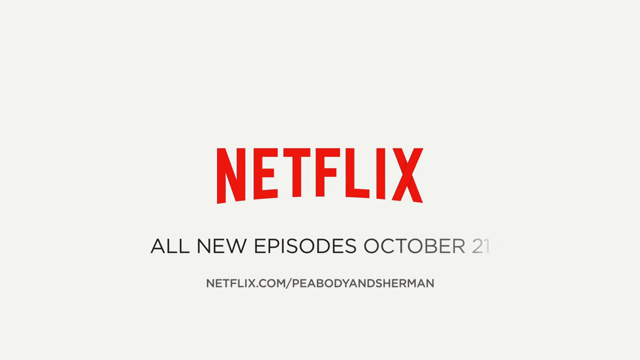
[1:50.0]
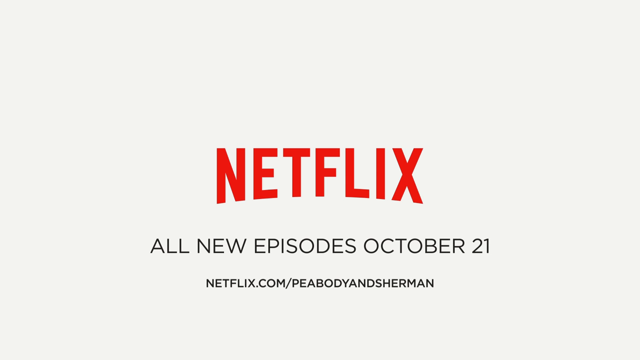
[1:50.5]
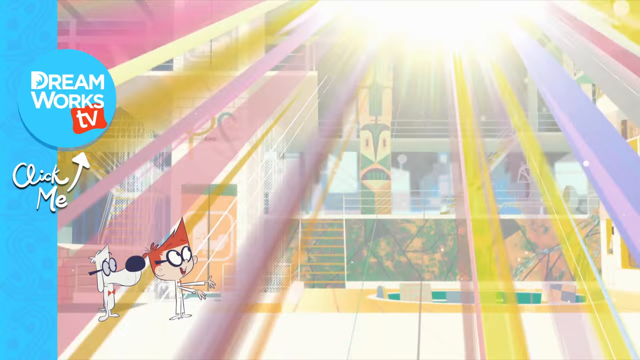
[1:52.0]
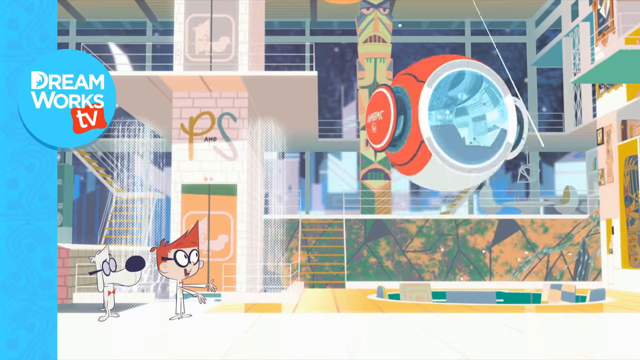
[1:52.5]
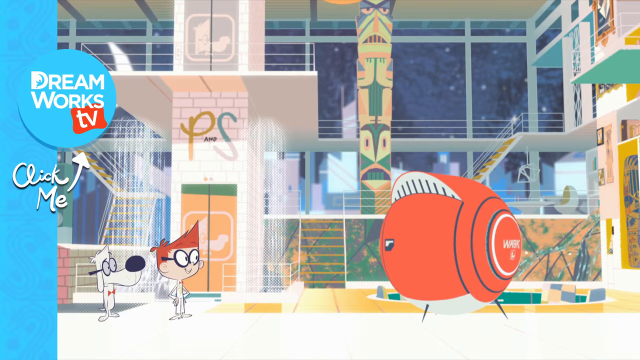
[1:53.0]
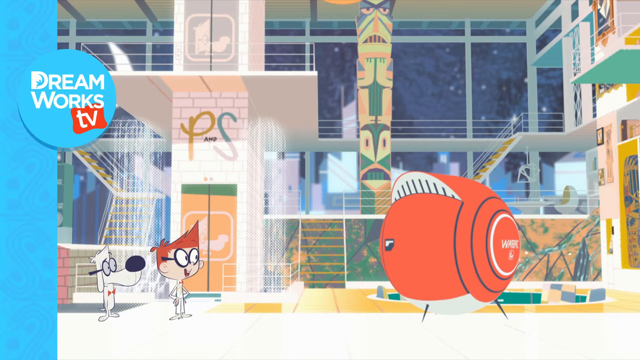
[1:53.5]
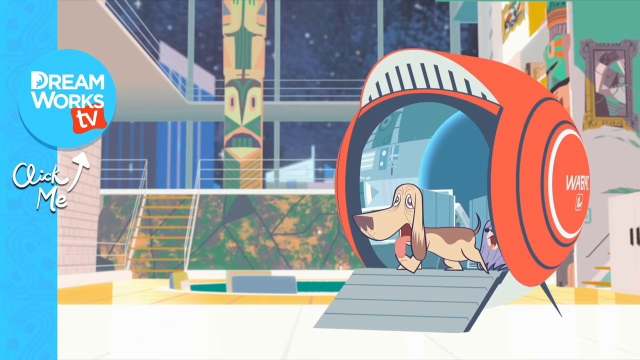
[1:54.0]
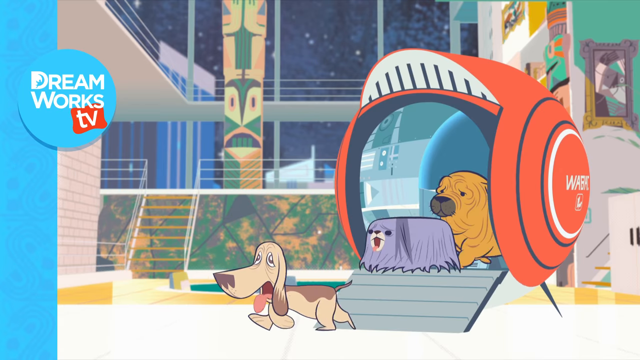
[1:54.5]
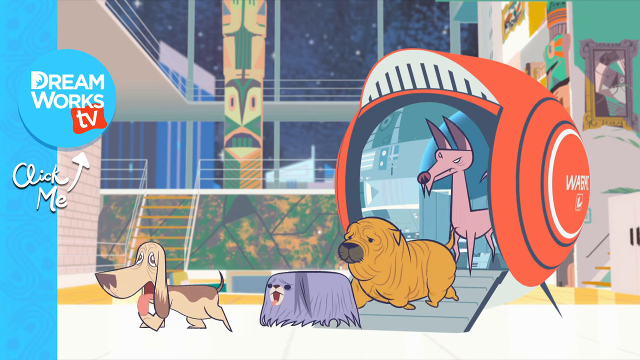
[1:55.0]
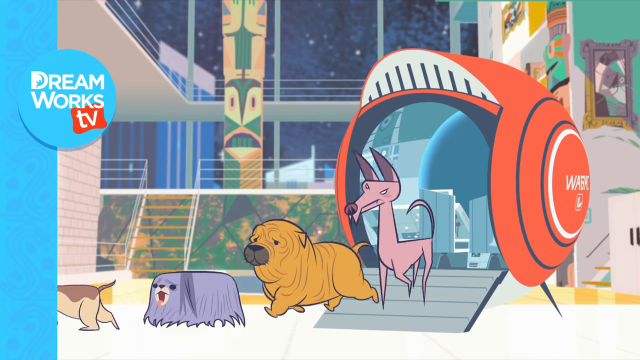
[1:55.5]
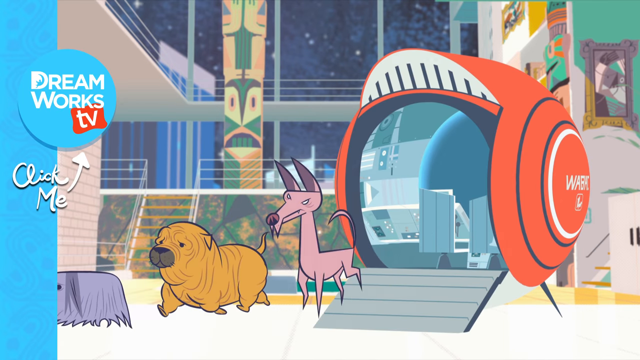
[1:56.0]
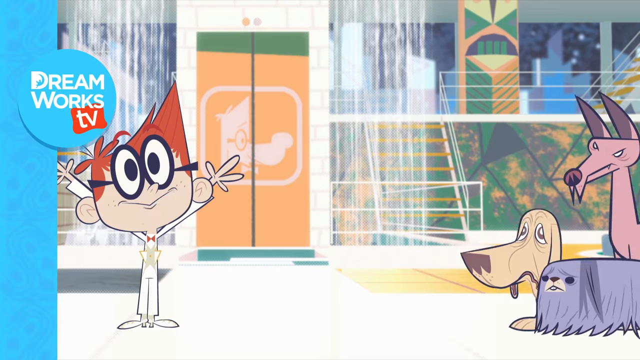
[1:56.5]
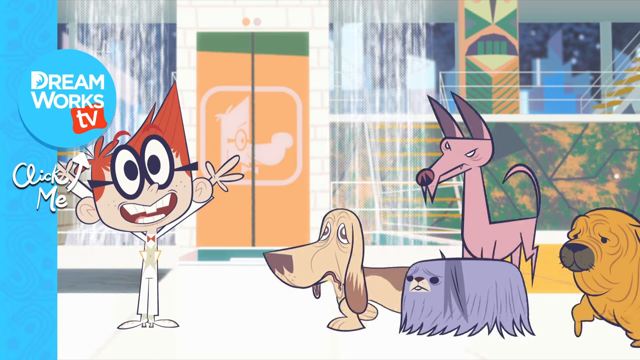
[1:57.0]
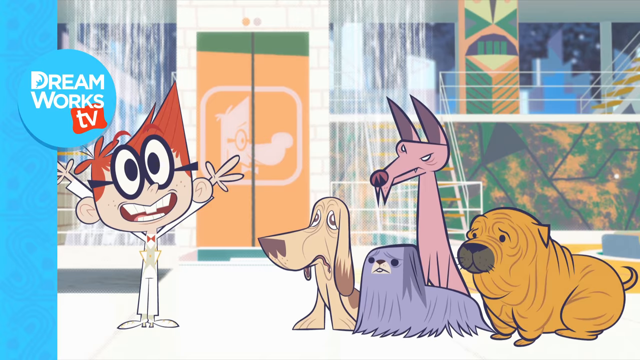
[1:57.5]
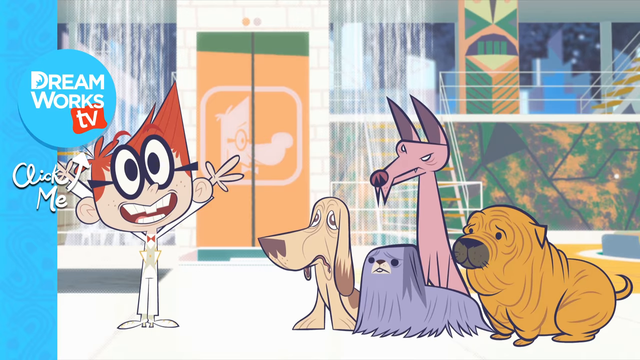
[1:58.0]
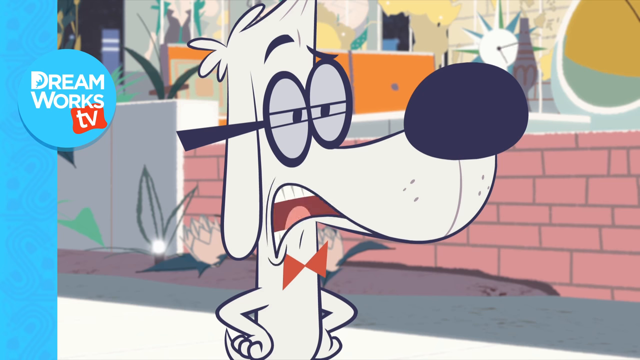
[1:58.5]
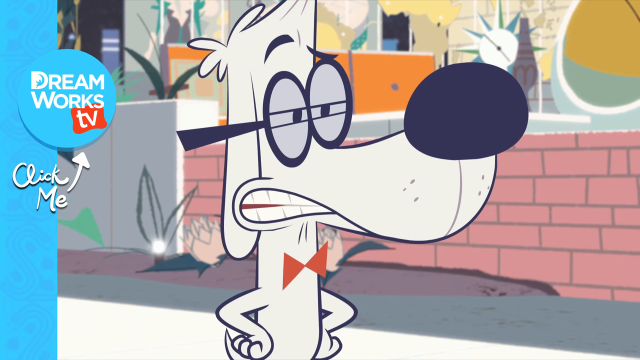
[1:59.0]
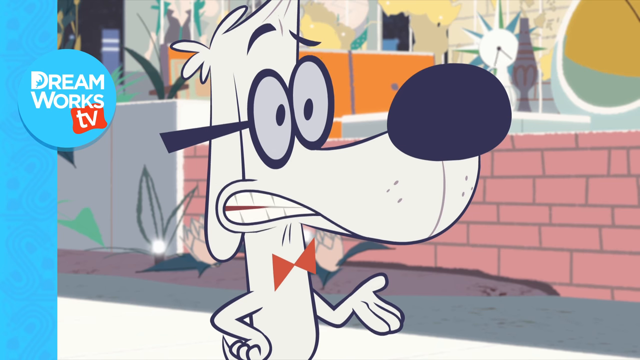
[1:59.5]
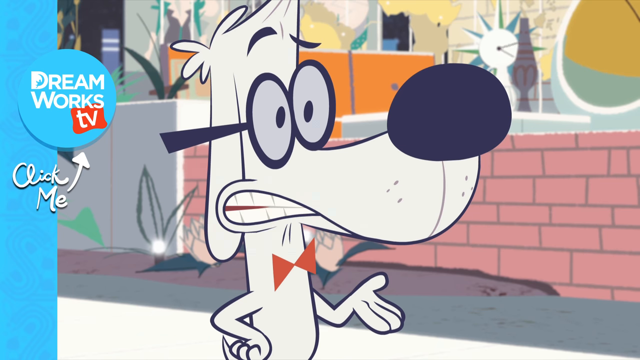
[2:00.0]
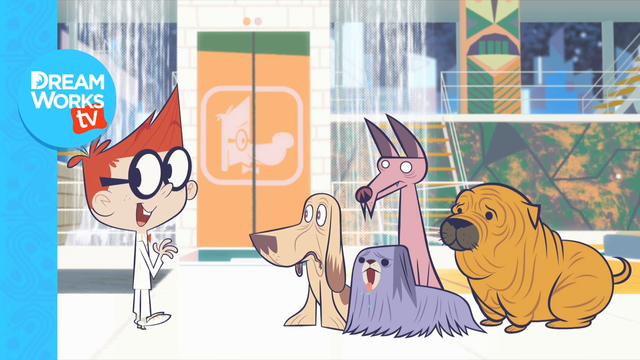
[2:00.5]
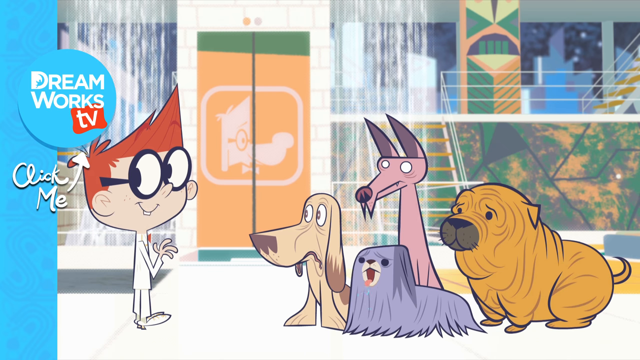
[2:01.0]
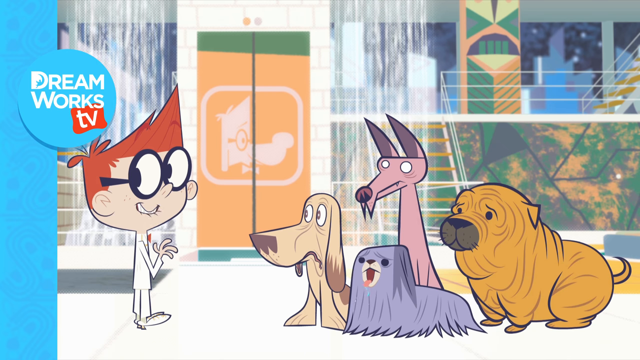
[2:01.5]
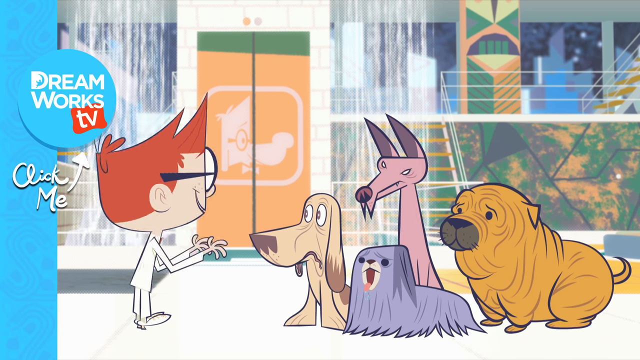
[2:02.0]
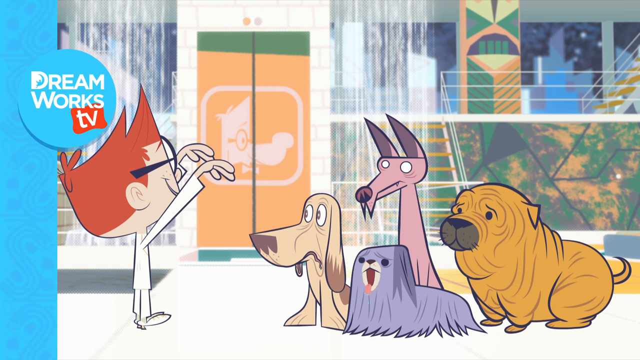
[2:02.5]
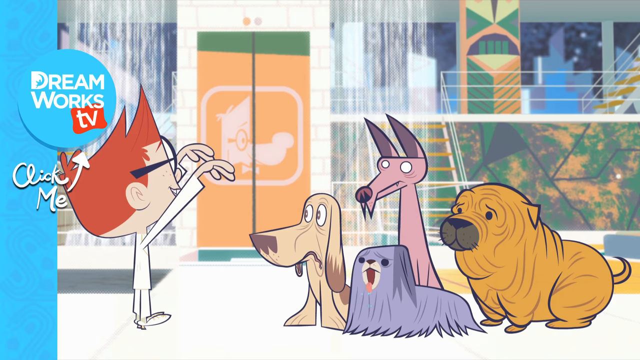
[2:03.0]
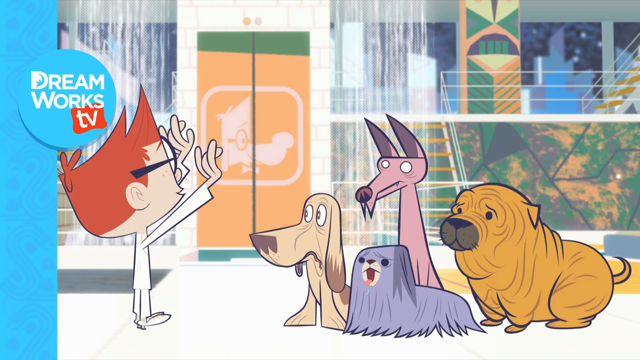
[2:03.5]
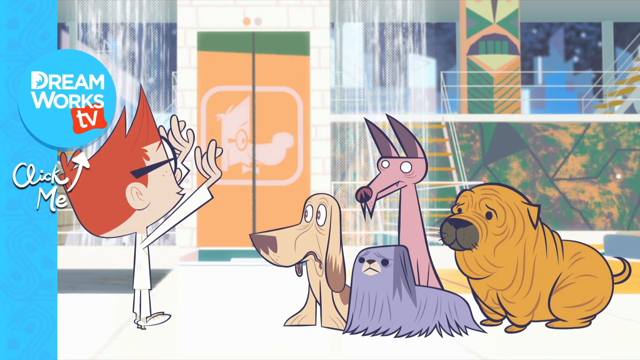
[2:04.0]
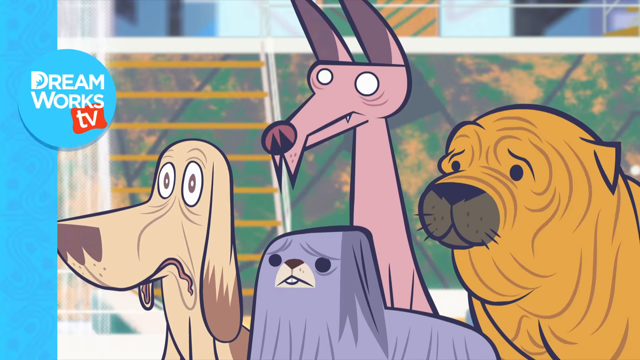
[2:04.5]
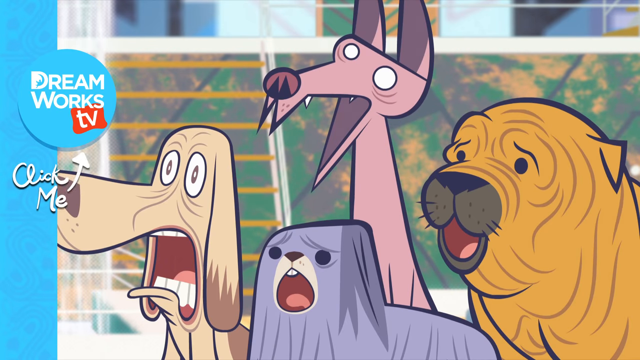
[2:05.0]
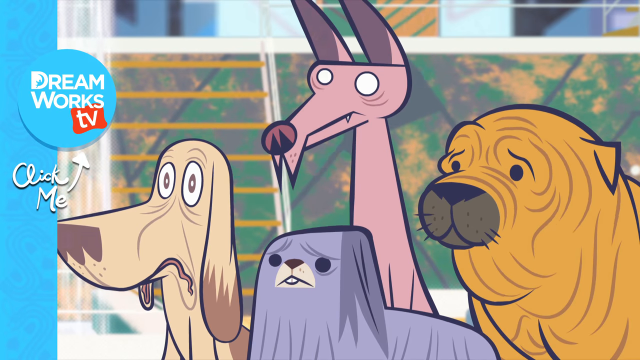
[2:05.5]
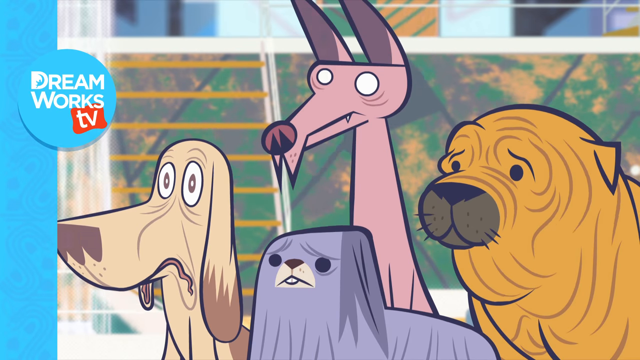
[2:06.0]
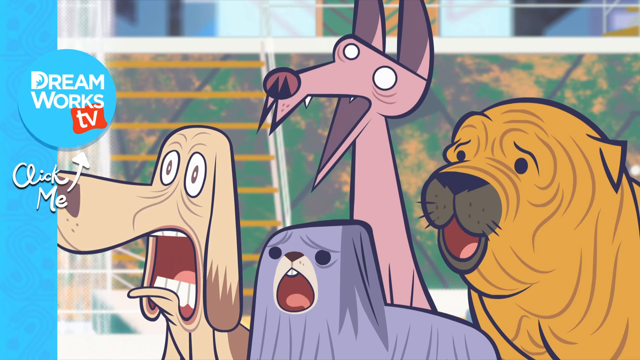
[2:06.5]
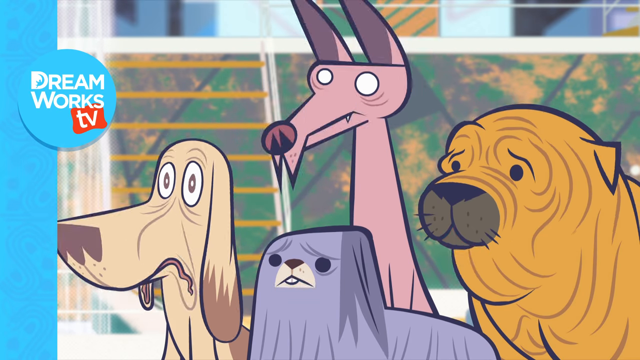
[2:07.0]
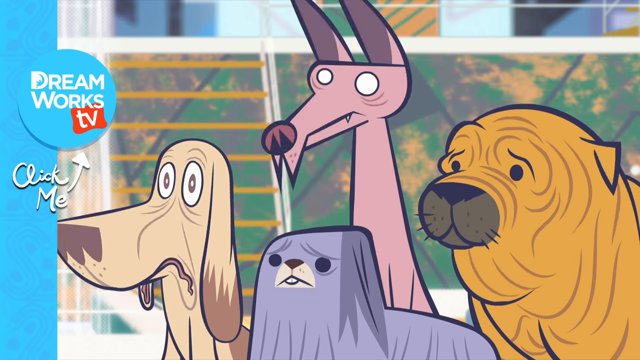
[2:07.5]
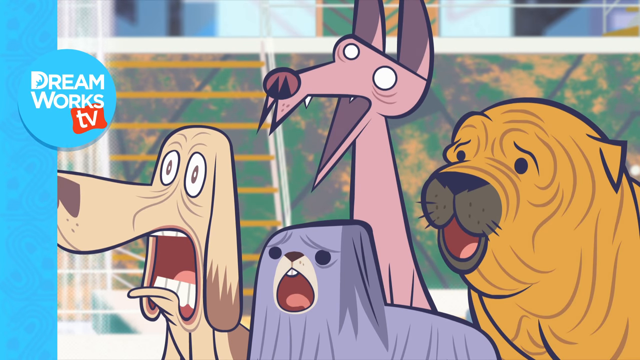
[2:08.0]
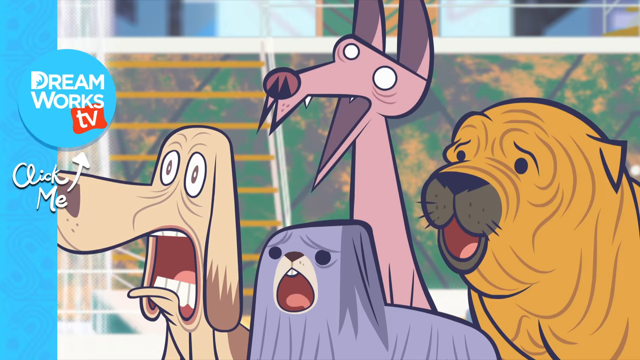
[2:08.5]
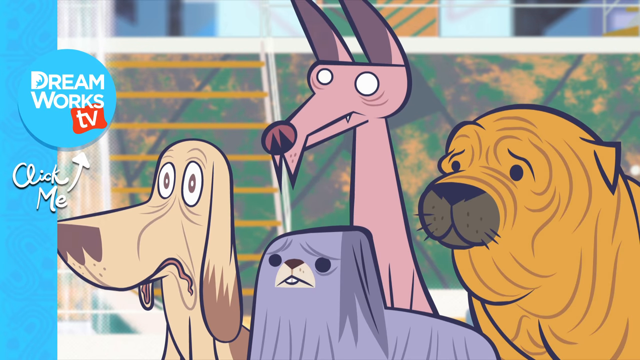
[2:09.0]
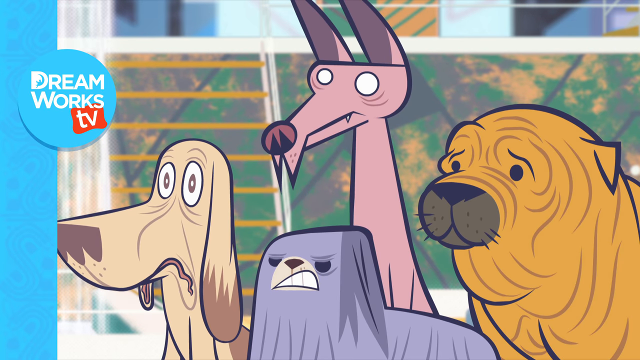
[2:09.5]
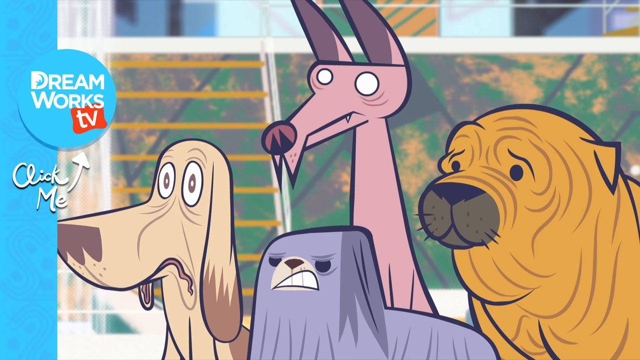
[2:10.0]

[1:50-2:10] A Netflix outro appears, then the video cuts to what appears to be footage from different Peabody episodes. In the left-hand corner of the screen, a DreamWorks advertisement fades in and out, saying "try me". It seems aimed at getting people to sign up for a trial of the DreamWorks TV app.